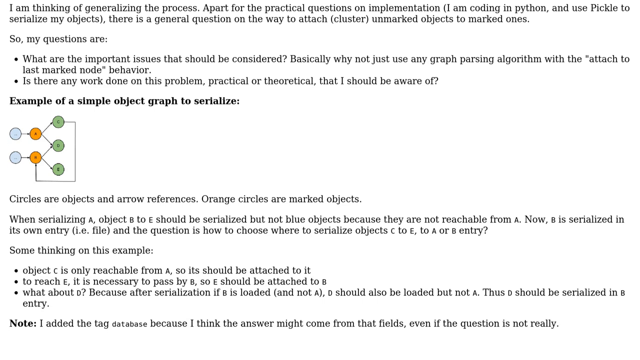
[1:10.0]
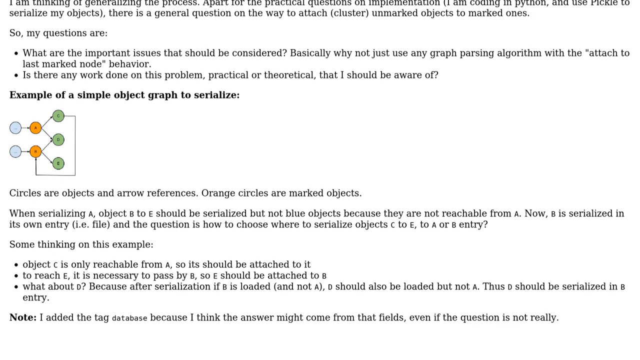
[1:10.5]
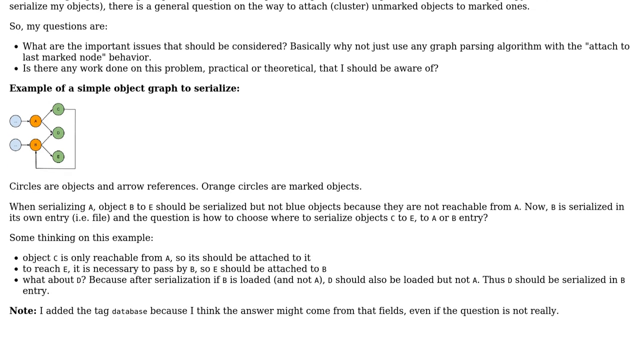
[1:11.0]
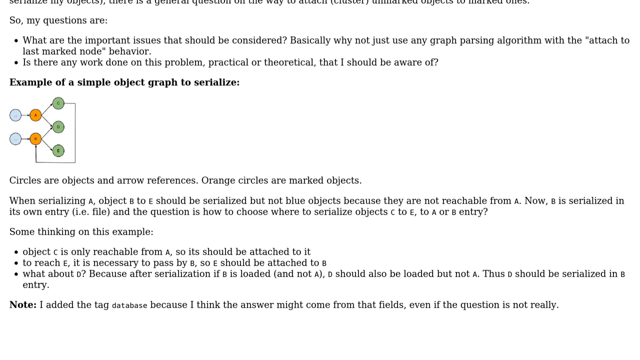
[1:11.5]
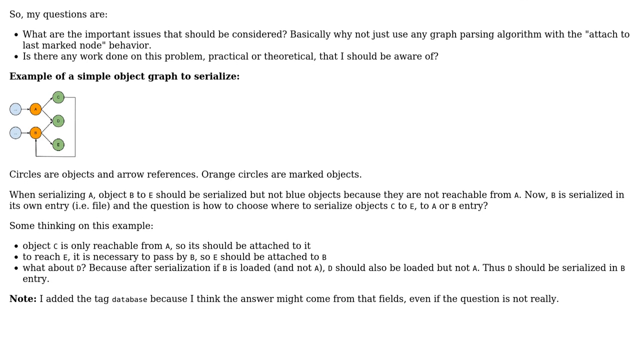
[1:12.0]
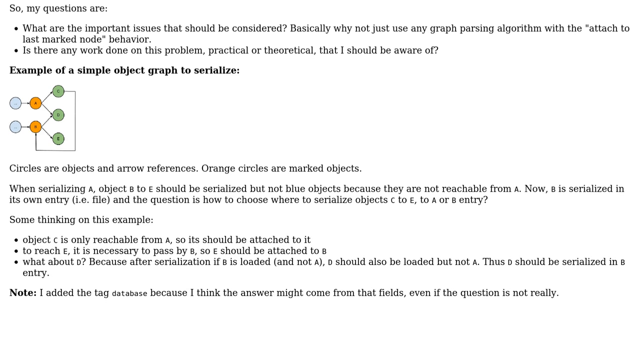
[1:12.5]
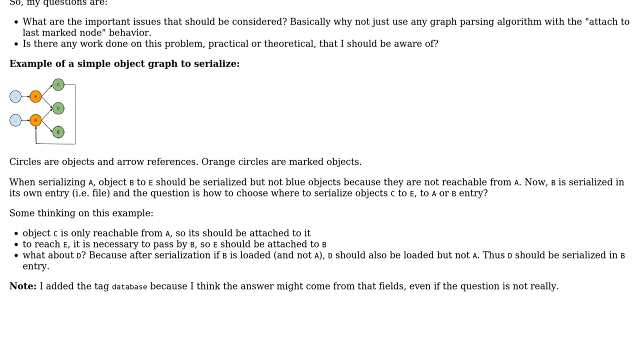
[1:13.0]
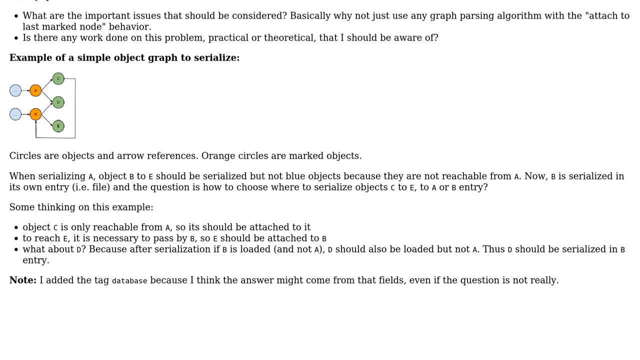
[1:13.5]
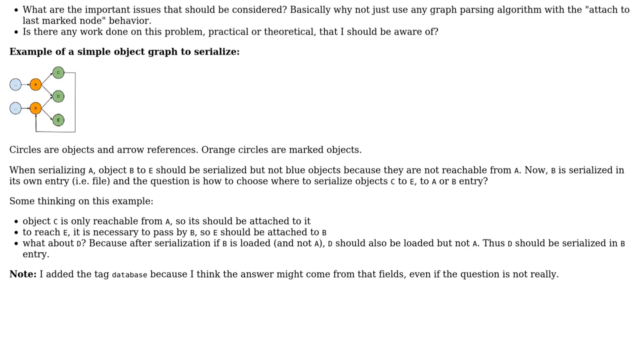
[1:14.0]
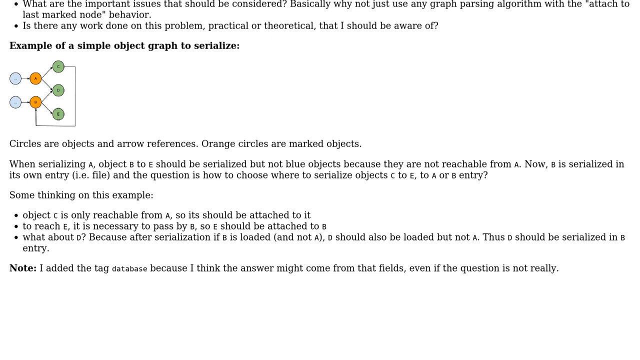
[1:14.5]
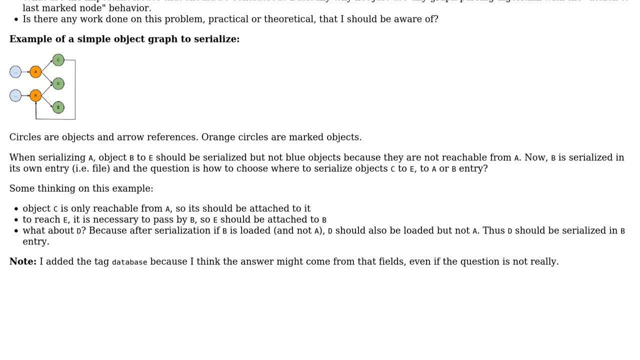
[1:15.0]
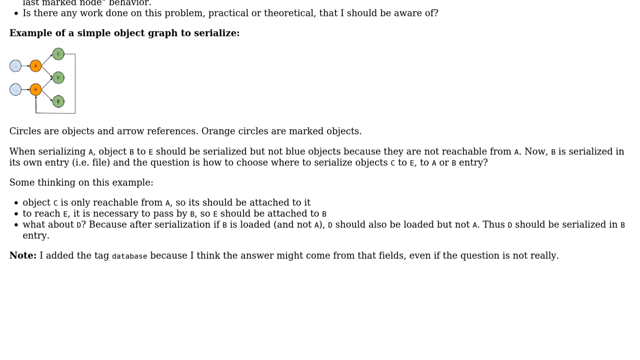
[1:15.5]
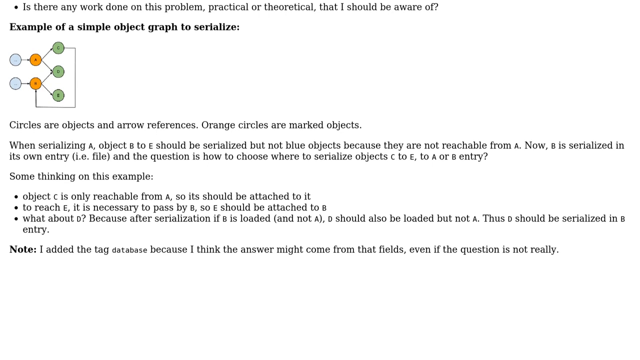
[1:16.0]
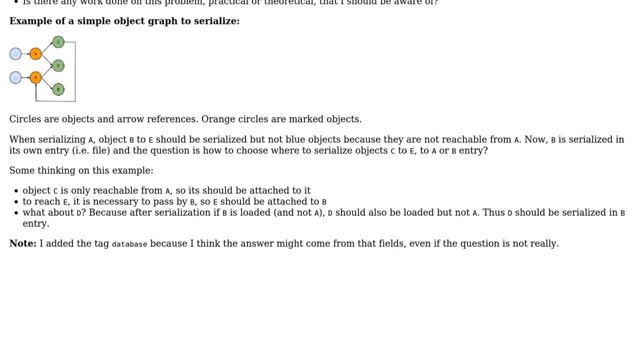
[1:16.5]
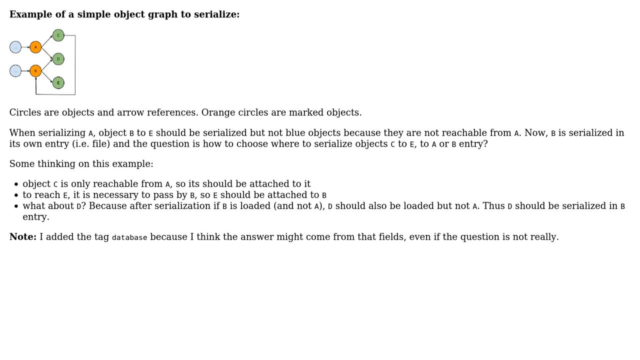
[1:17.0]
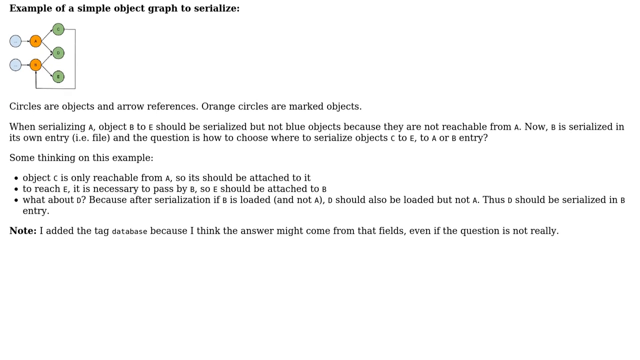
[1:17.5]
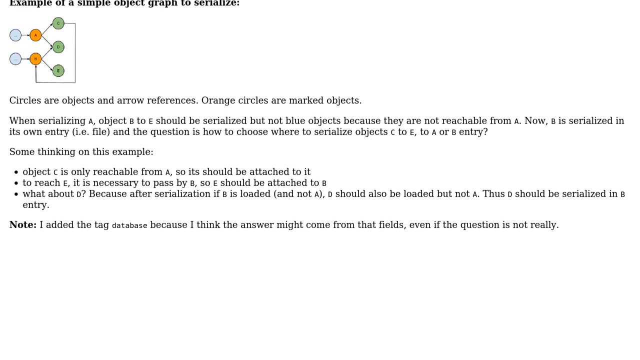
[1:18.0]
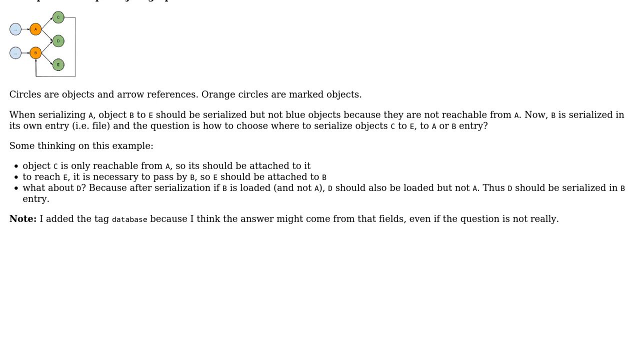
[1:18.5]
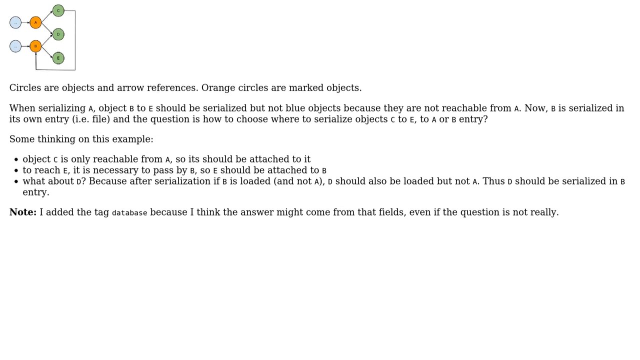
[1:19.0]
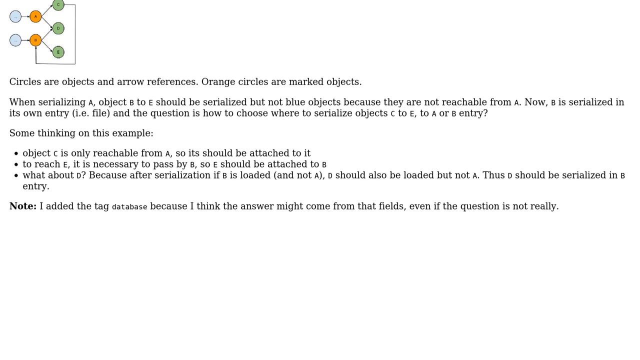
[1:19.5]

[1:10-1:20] The same screen of text keeps scrolling slowly from bottom to top. At one point it says "some thinking on the example," followed by bullet points. One reads "object C is only reachable from A, so it should be attached to it," referring to the graph at the top. Two more bullet points follow about the same graph.